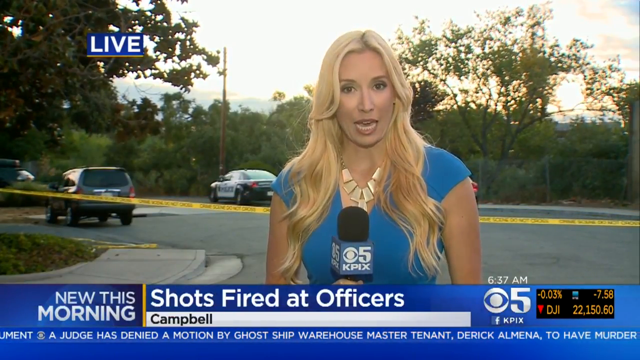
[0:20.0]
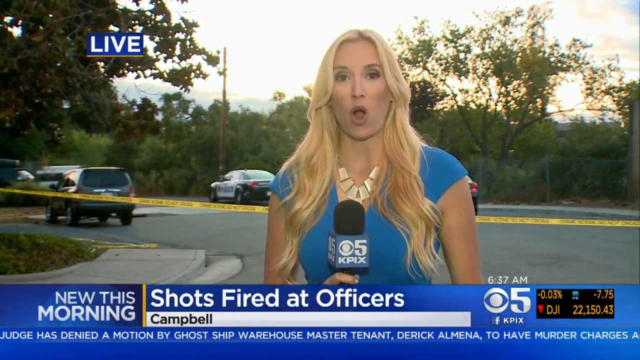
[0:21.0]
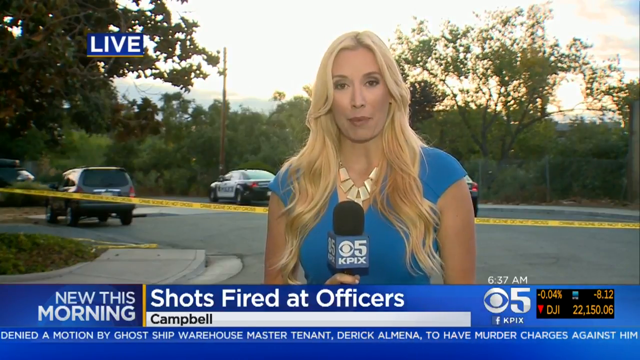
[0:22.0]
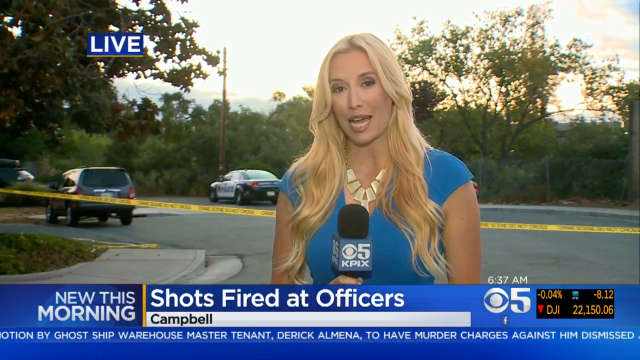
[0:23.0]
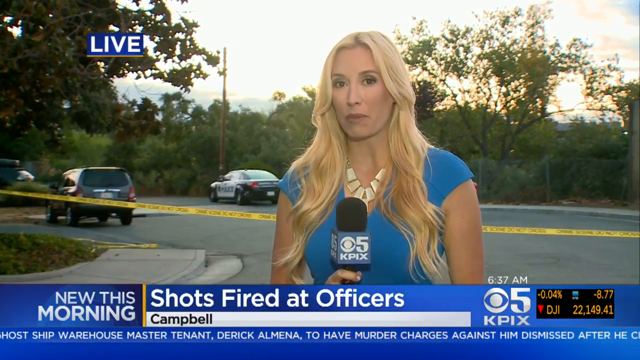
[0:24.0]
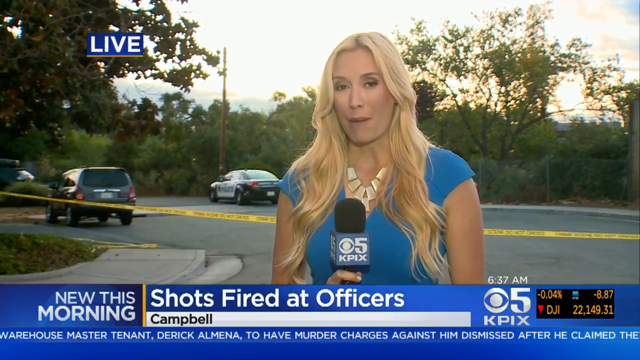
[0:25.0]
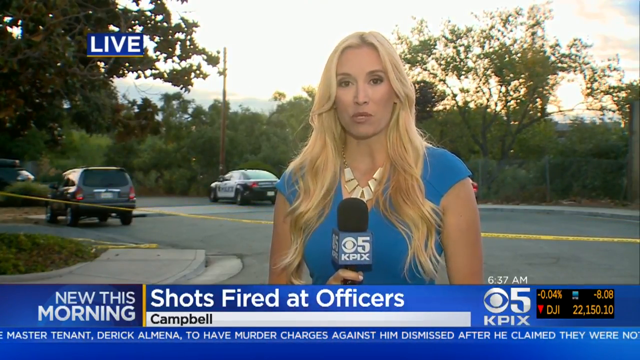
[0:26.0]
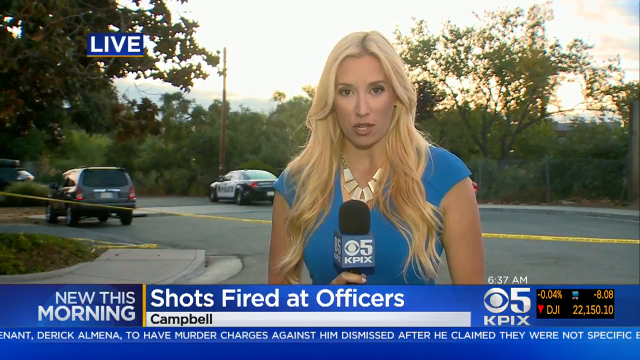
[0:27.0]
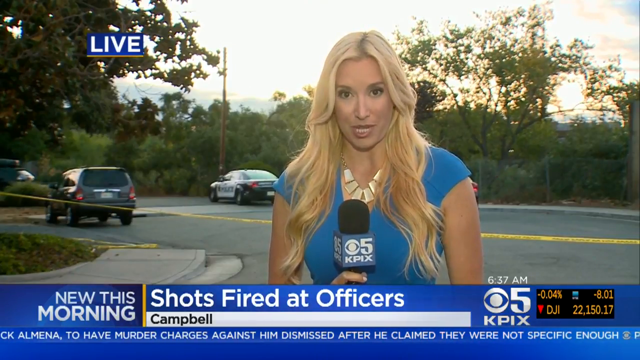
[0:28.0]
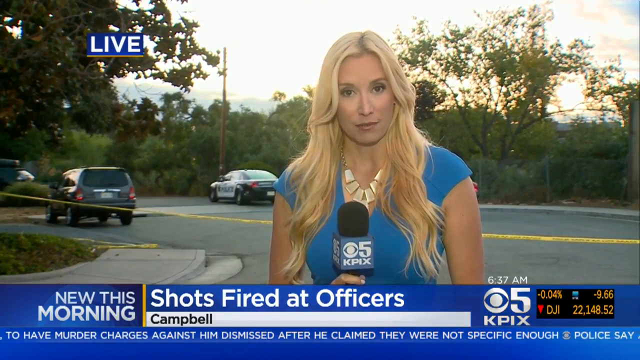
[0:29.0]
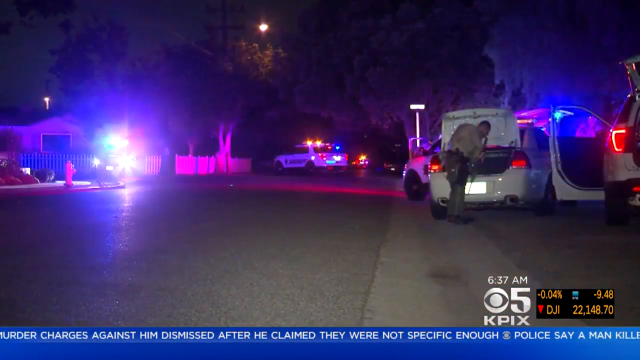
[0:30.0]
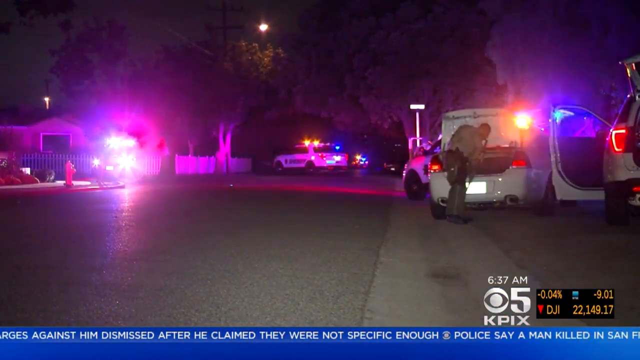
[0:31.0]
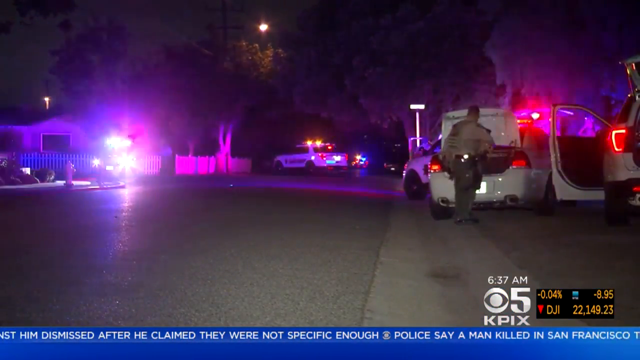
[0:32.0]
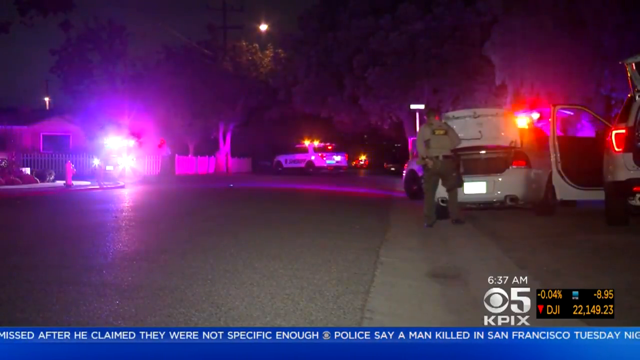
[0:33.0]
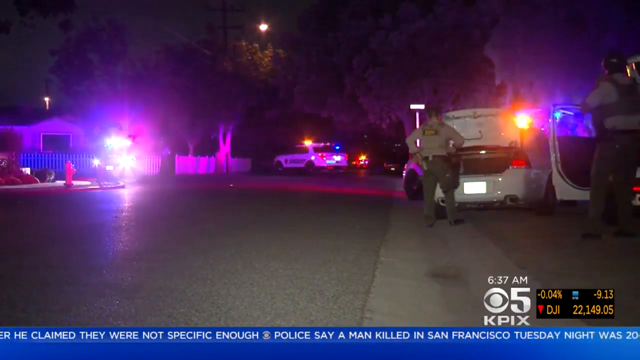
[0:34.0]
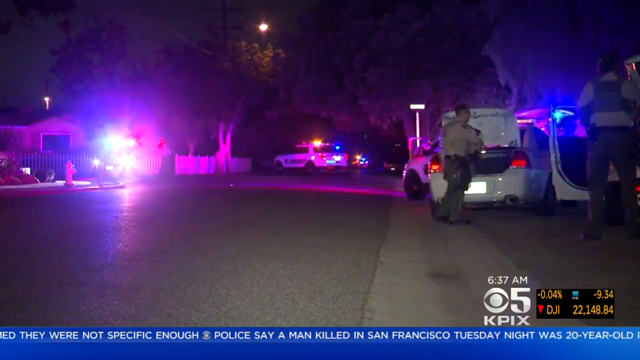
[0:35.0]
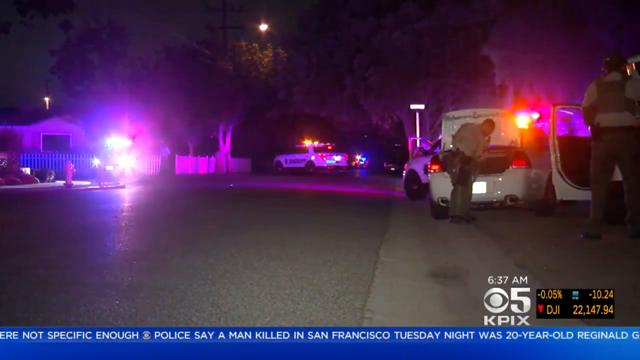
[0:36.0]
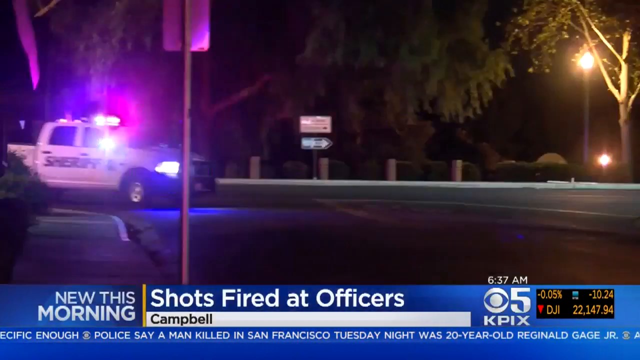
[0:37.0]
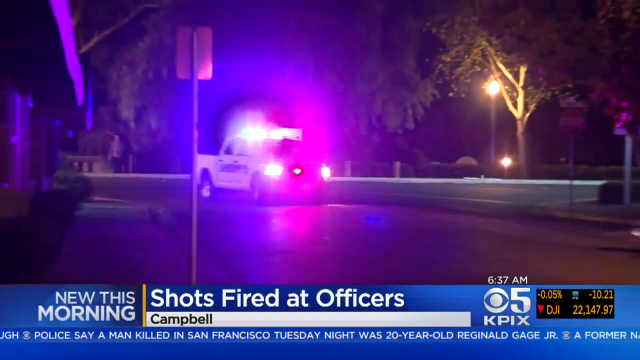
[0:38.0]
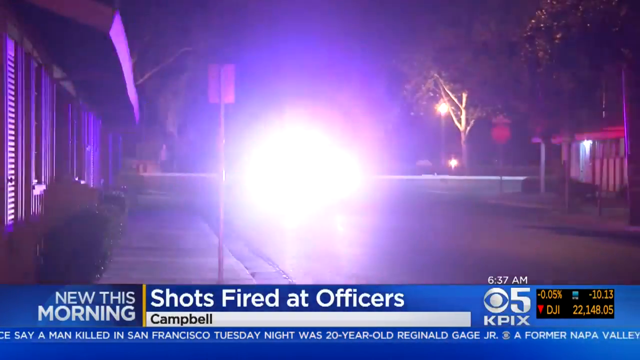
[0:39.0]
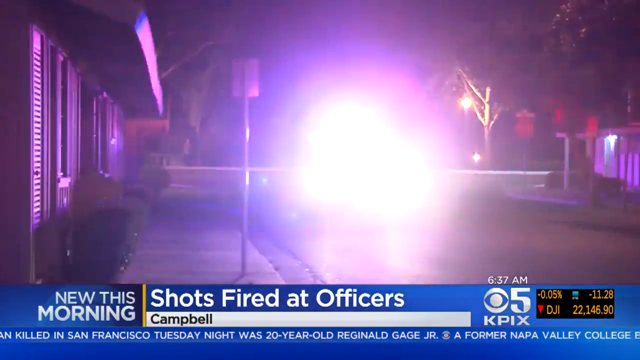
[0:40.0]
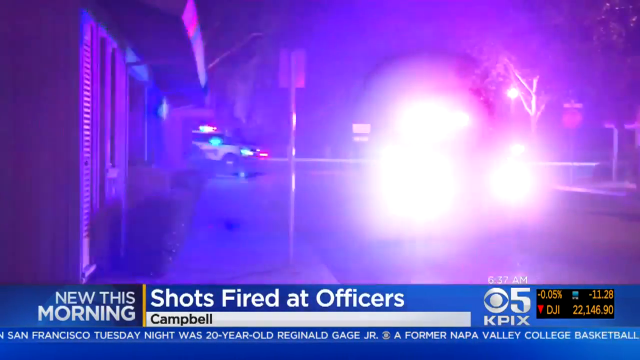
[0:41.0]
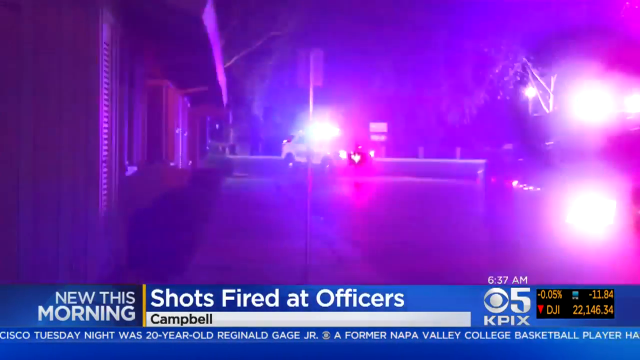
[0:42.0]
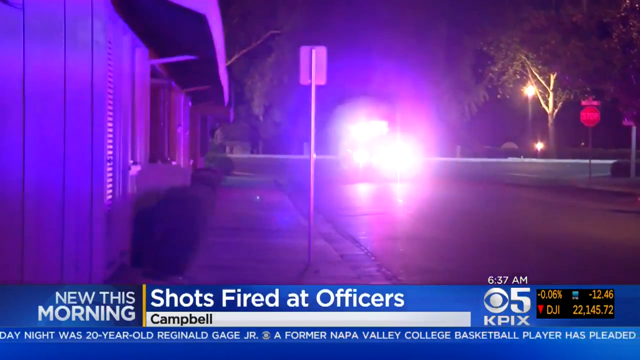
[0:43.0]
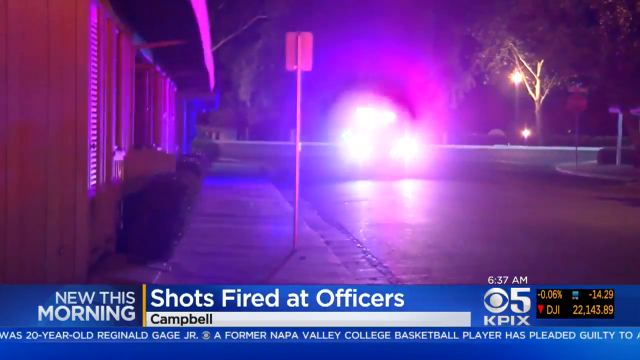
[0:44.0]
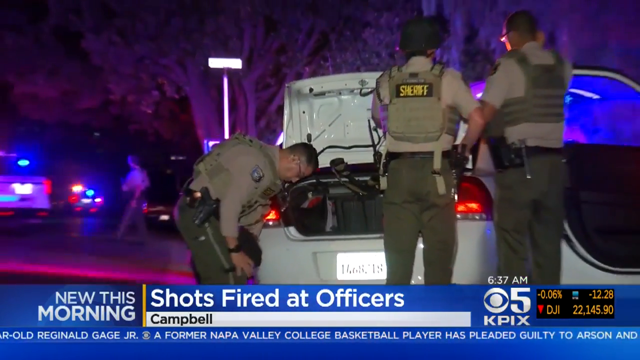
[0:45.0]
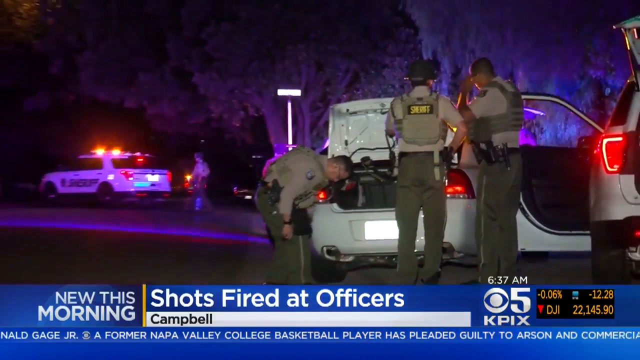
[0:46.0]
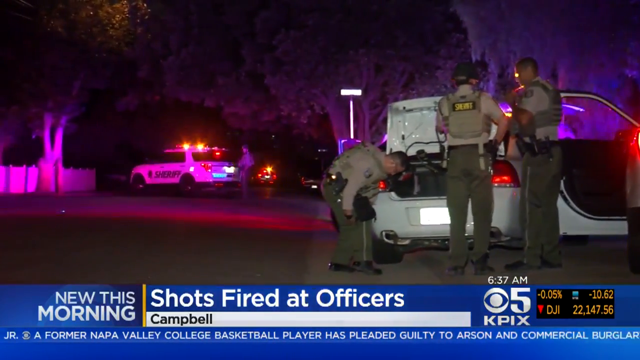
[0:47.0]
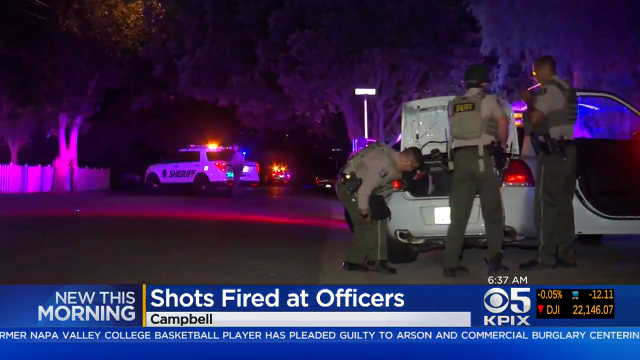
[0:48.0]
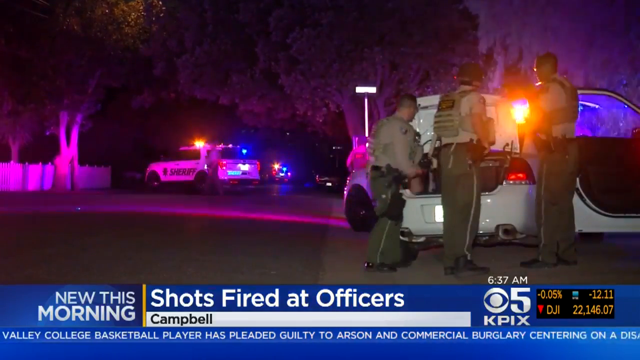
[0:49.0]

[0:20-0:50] Katie continues reporting from Campbell on the shots fired. Vehicles are shown, and danger tape has been placed across the road, restricting people from going beyond that part of it. There is a police van and an ordinary car that seems to belong to a resident. The scene then changes to night: police vans travel down the road with their siren lights on. Police officers are seen outside, fixing their uniforms and attaching guns to them. Three of the male officers are in brown uniforms, wearing bulletproof vests and carrying guns; some guns are attached at the waist. More police vans arrive at the scene.